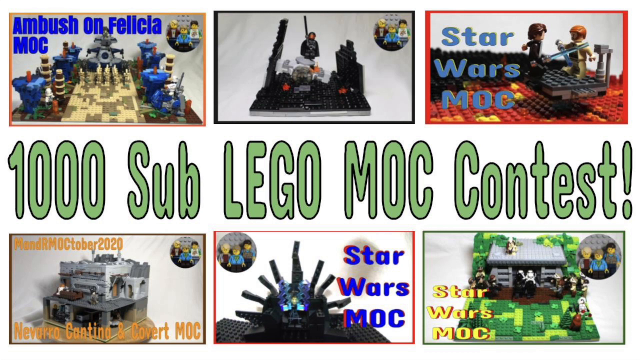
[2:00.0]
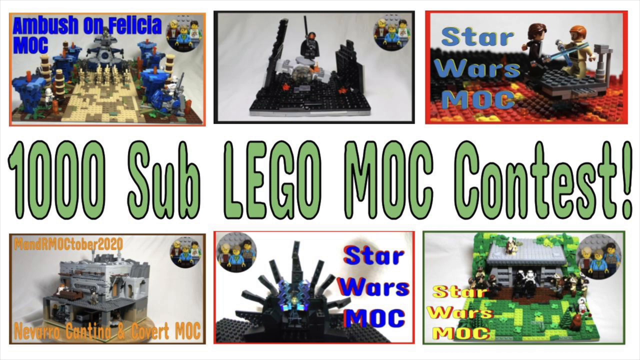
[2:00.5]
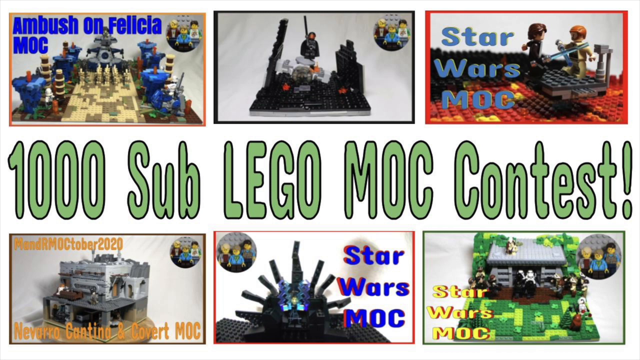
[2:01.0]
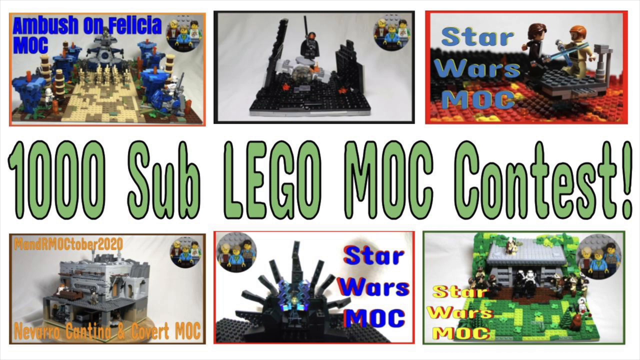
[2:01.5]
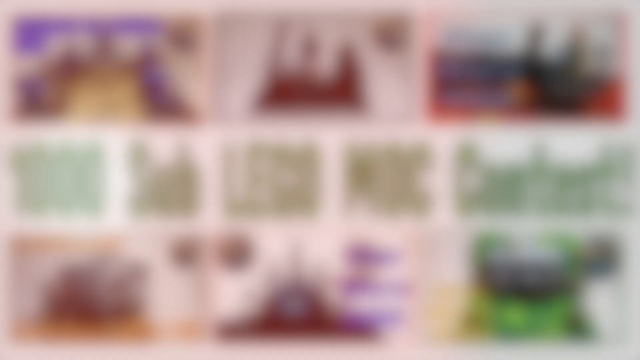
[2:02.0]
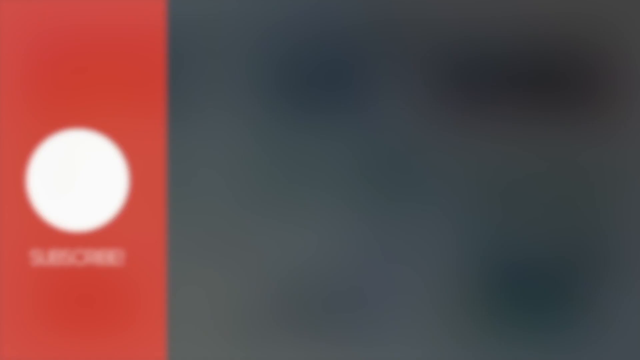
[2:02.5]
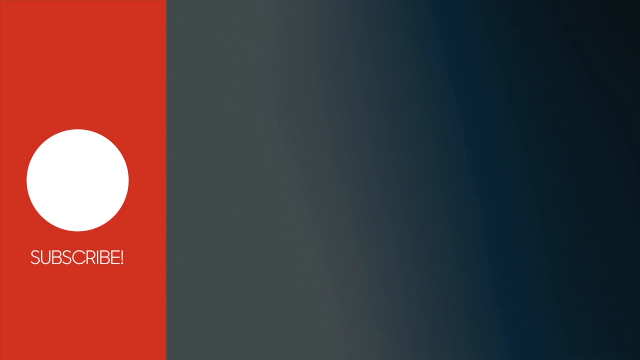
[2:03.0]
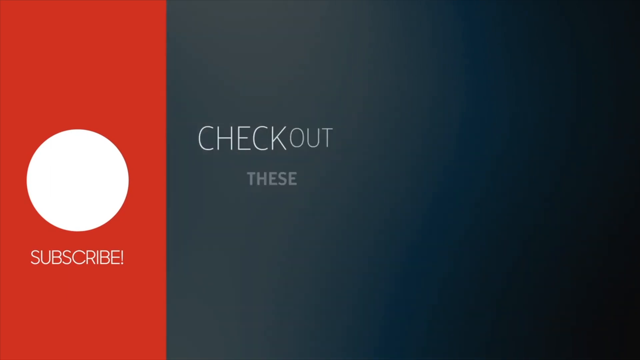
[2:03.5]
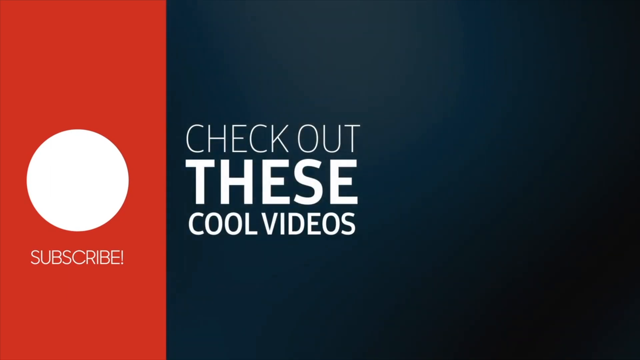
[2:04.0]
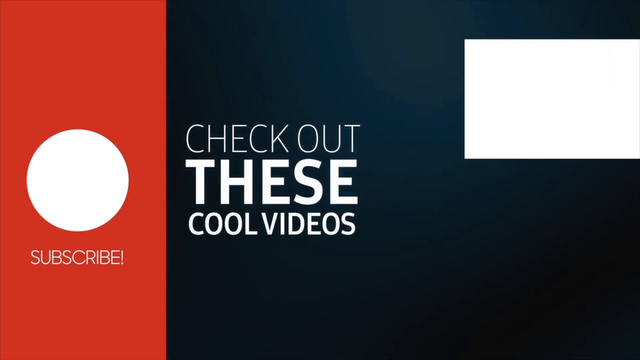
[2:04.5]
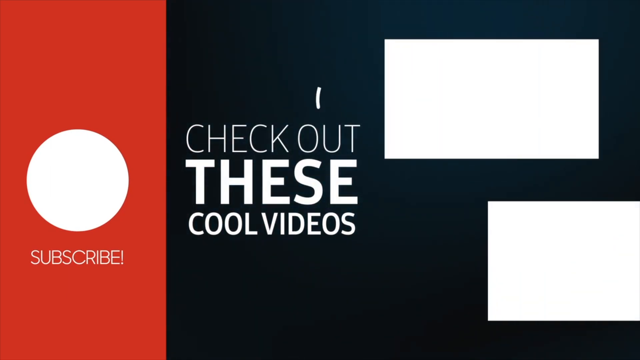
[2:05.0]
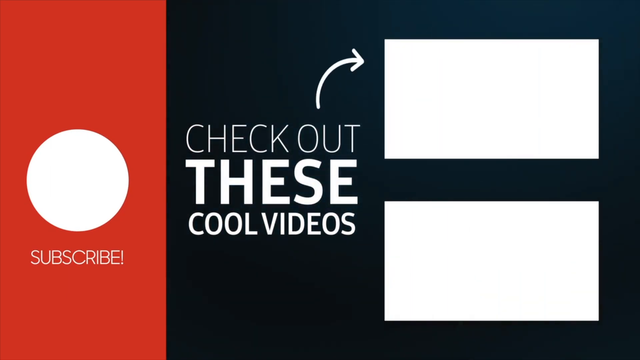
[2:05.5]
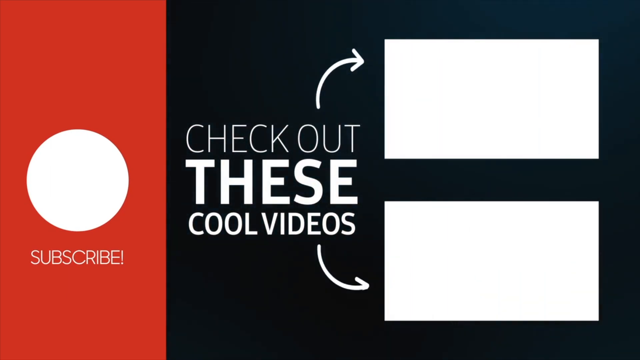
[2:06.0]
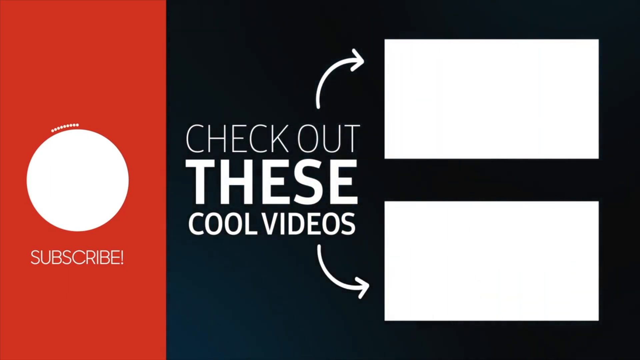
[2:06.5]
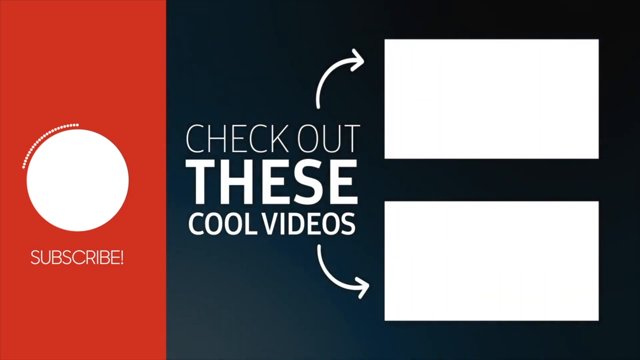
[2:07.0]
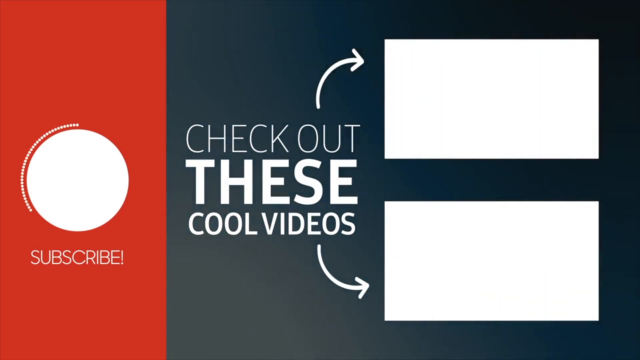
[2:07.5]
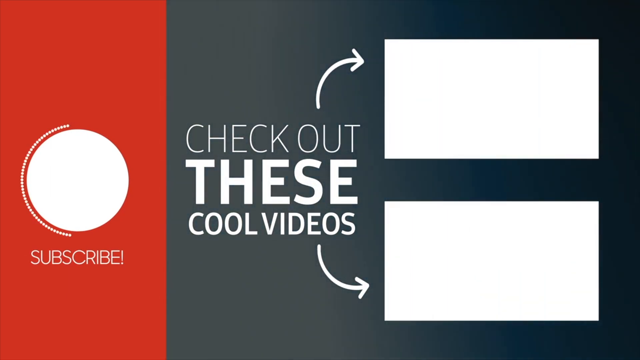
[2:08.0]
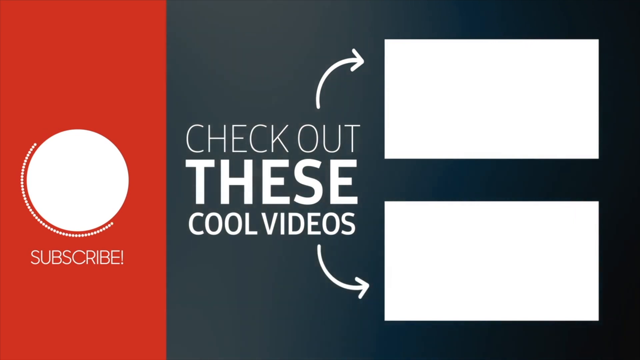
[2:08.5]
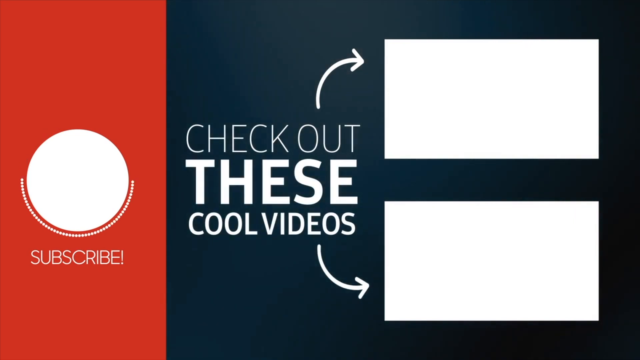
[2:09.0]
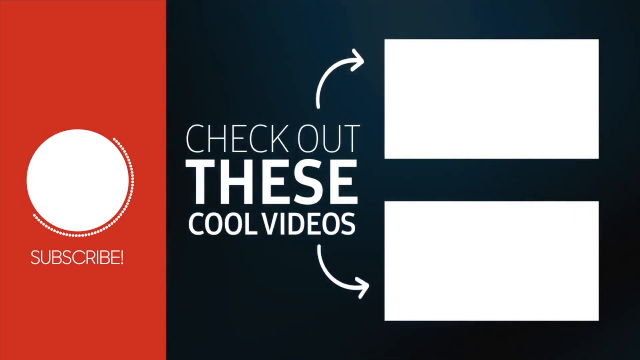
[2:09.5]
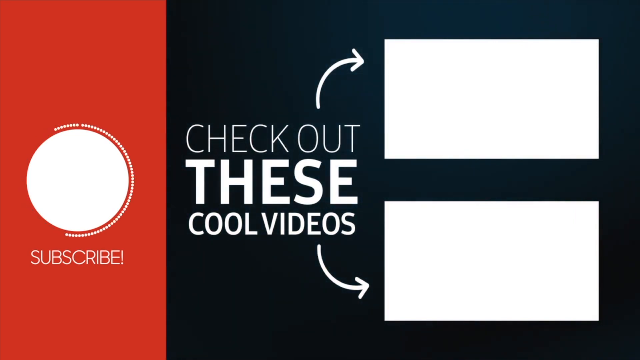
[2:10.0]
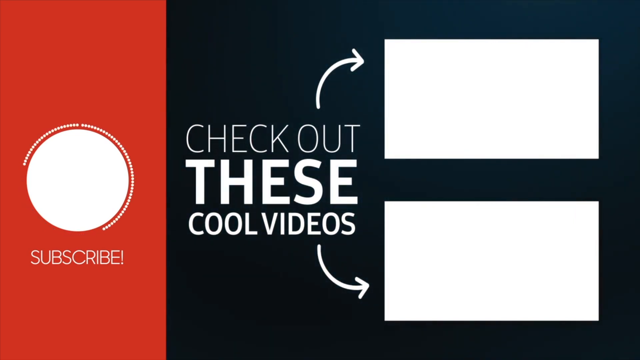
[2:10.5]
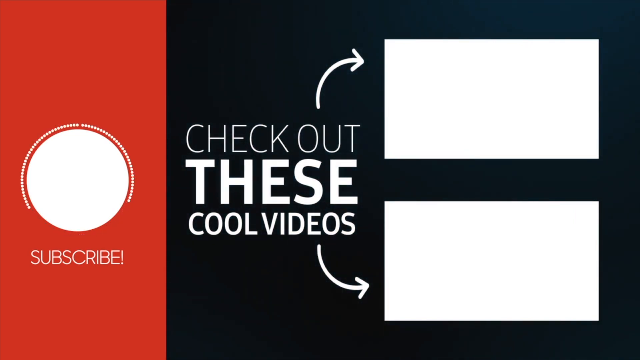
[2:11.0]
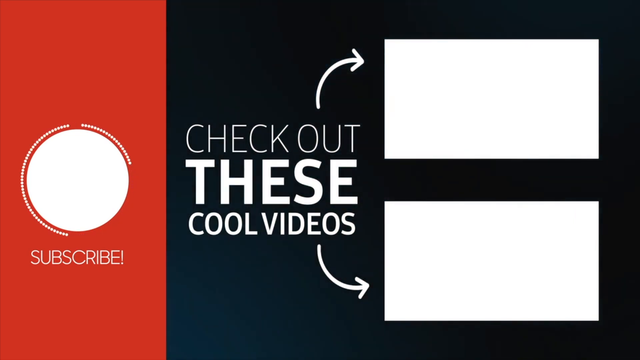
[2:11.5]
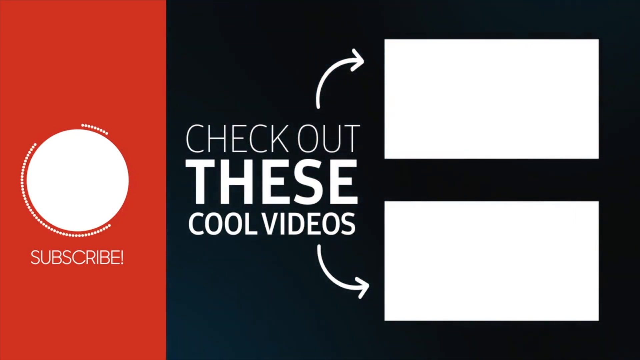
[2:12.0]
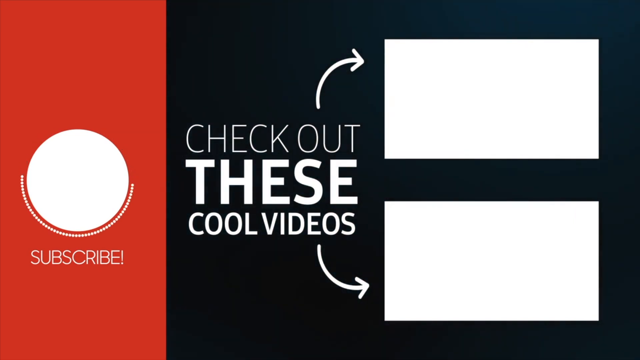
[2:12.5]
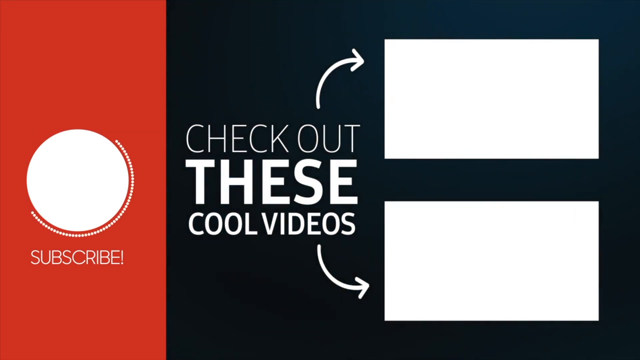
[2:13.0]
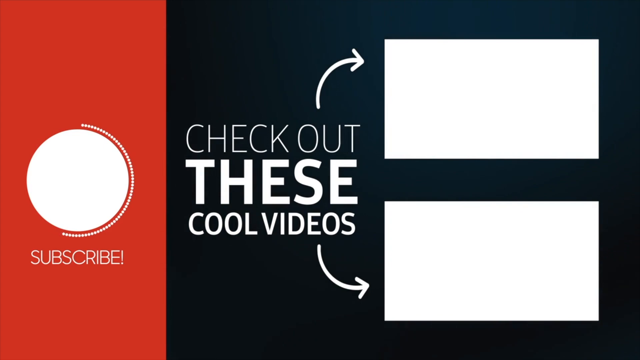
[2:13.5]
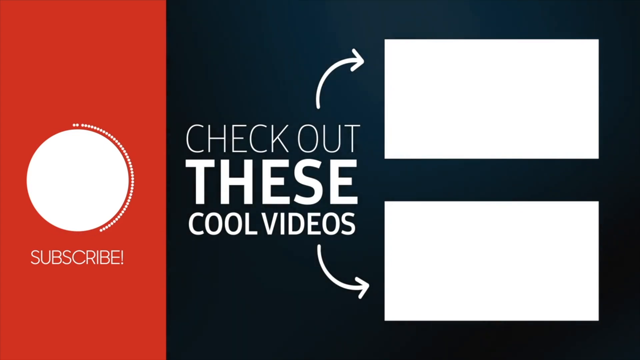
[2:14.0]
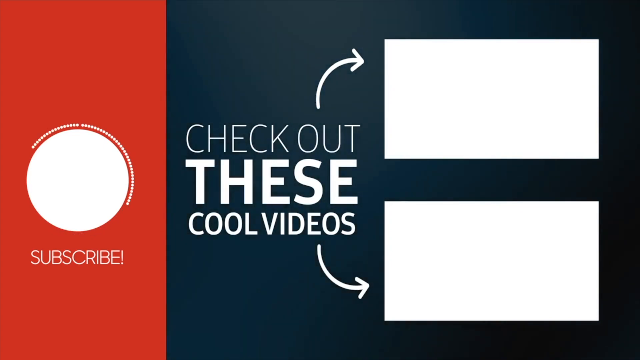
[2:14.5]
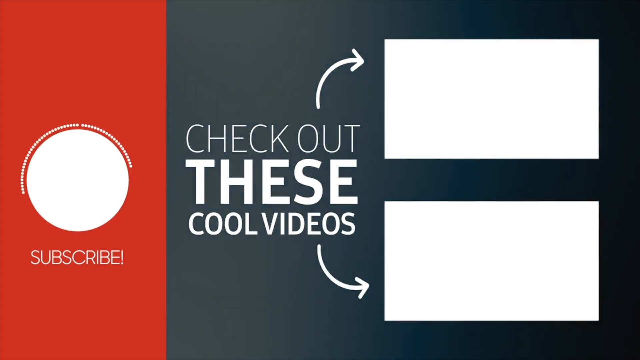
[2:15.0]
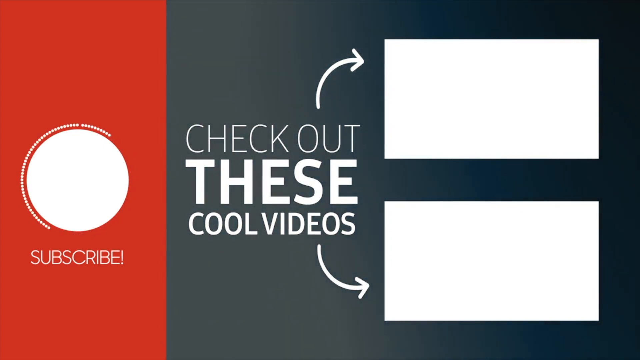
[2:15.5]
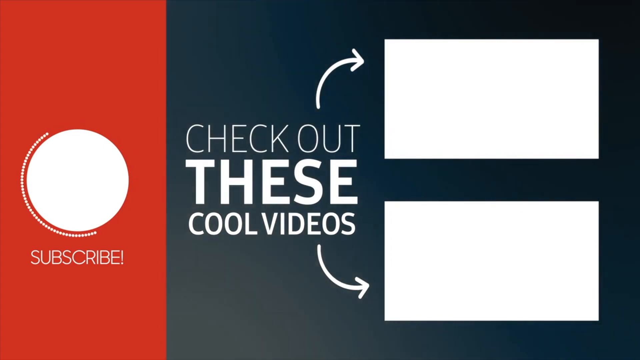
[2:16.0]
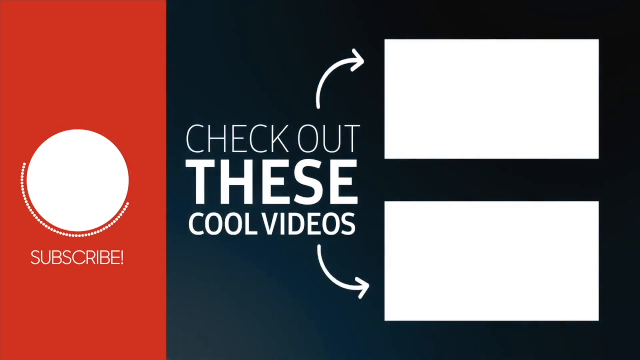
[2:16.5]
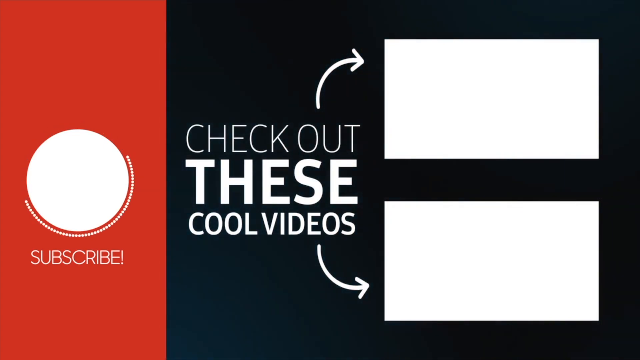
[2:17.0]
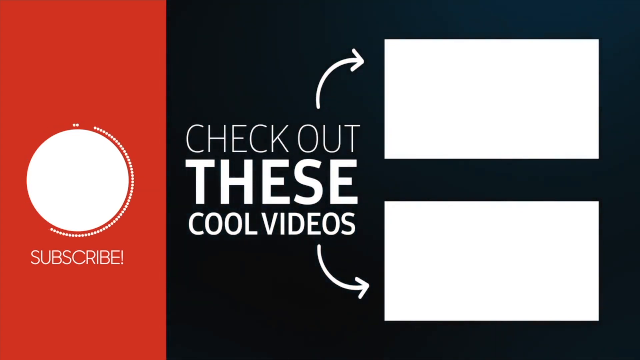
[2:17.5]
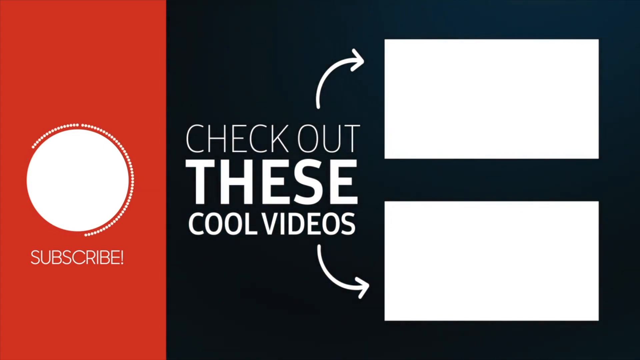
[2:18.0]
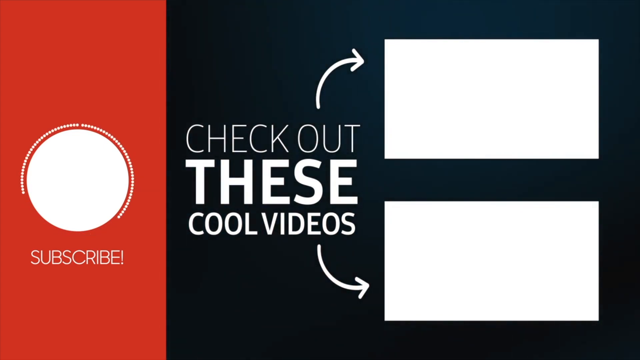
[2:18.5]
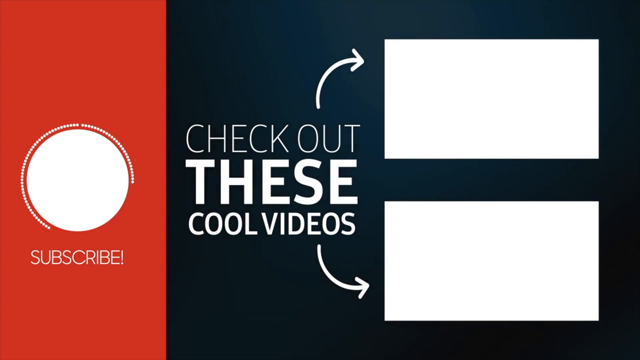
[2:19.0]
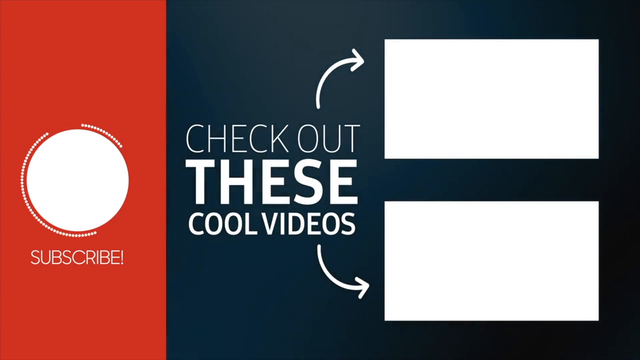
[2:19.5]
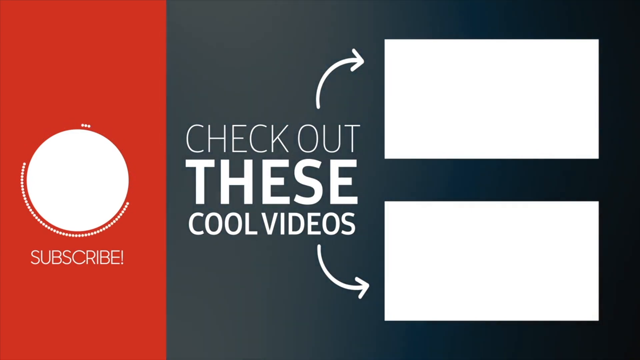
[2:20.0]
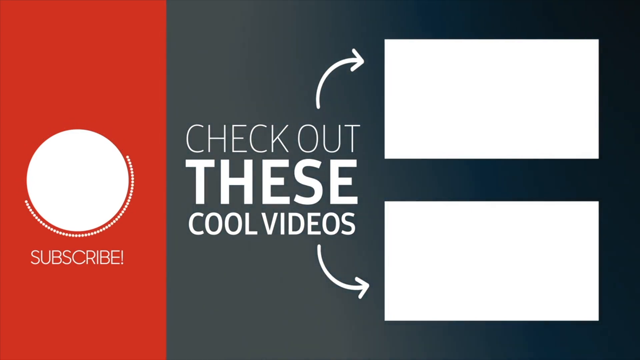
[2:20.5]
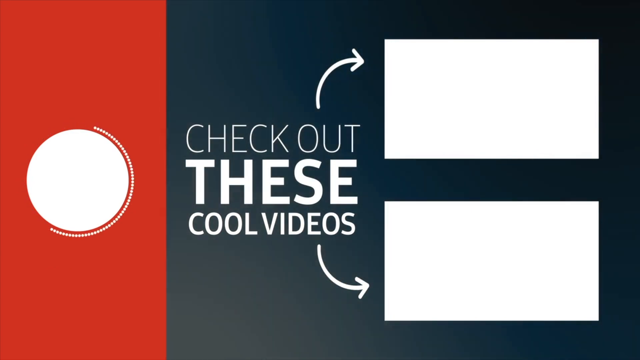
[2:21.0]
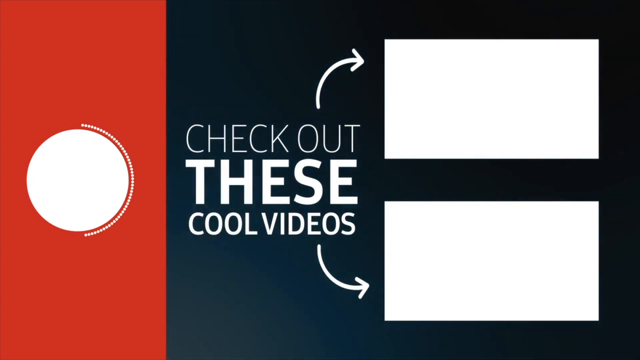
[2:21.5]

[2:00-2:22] The video begins with the same cover page and then transitions to a screen that says "subscribe" on the left side, on a vertical yellow rectangular box with a circle on it. It also says "check out these cool videos," and two blank white rectangles appear to the right of it, with nothing to see in them. About three-fourths of the background is black. The video is straightforward and informational rather than promotional.